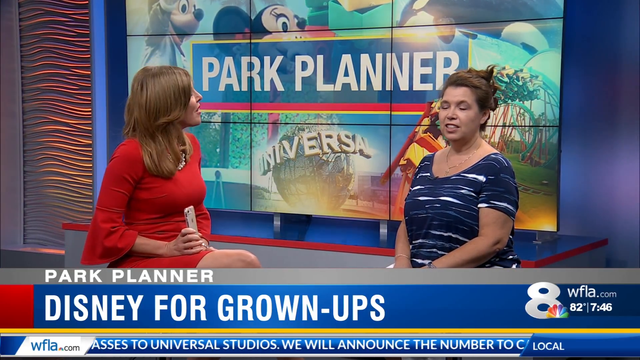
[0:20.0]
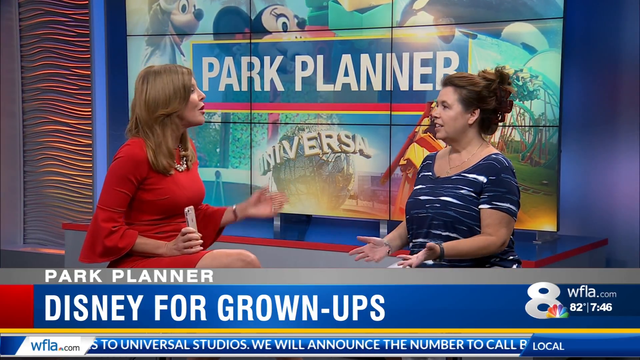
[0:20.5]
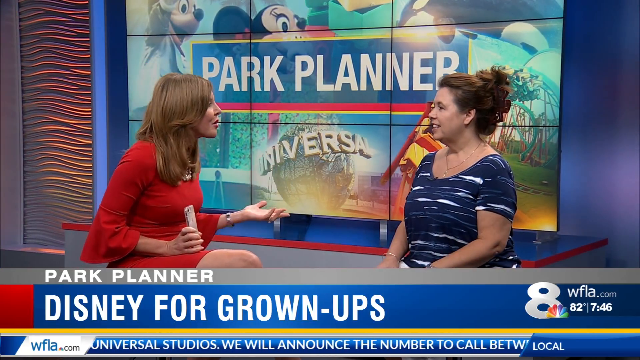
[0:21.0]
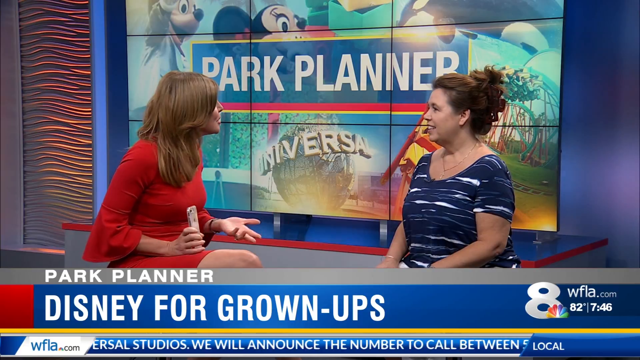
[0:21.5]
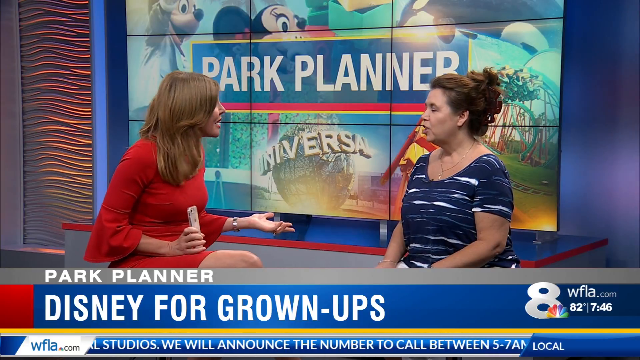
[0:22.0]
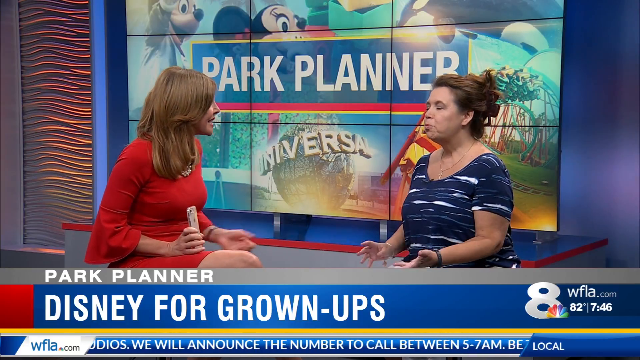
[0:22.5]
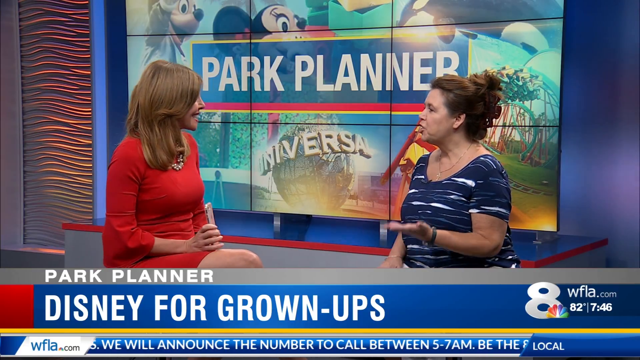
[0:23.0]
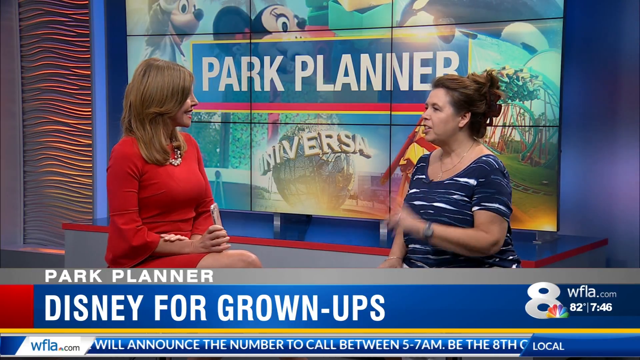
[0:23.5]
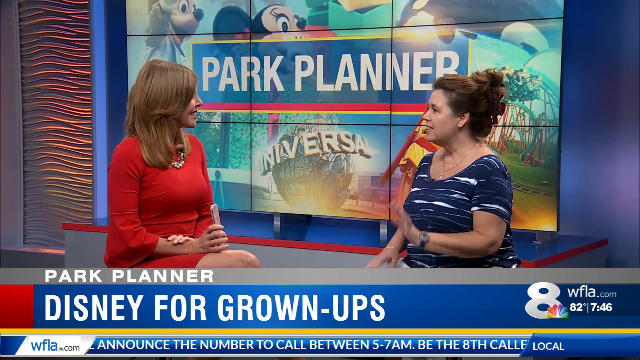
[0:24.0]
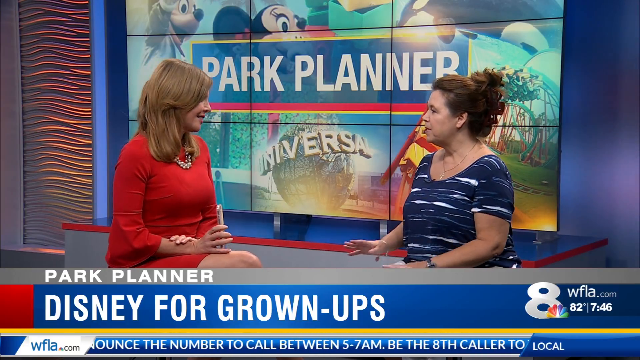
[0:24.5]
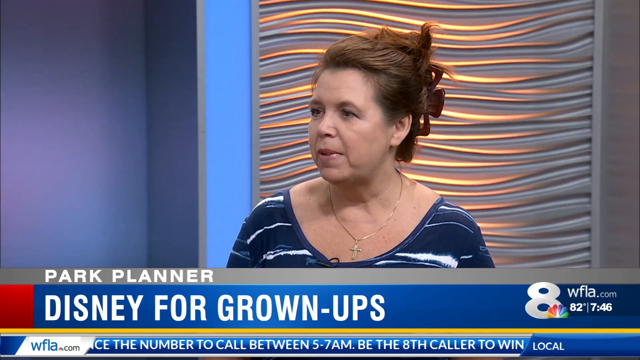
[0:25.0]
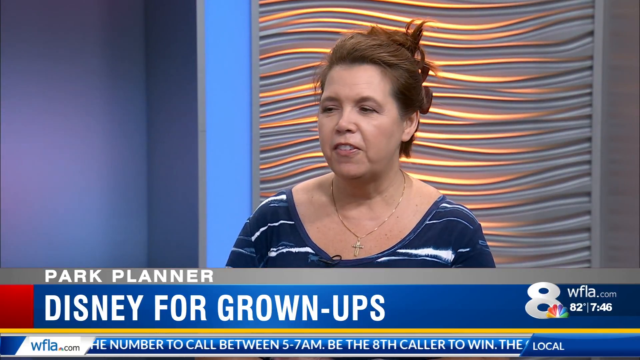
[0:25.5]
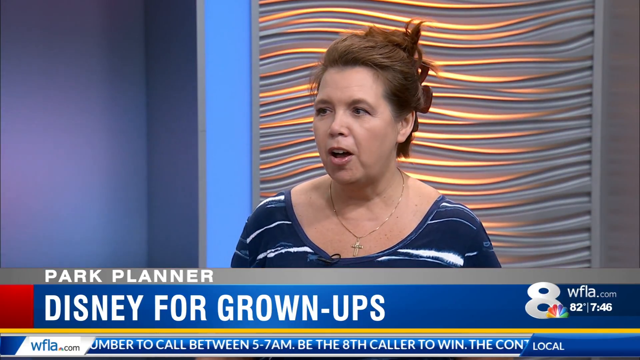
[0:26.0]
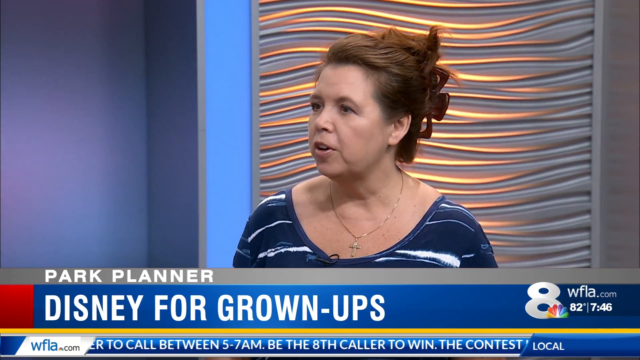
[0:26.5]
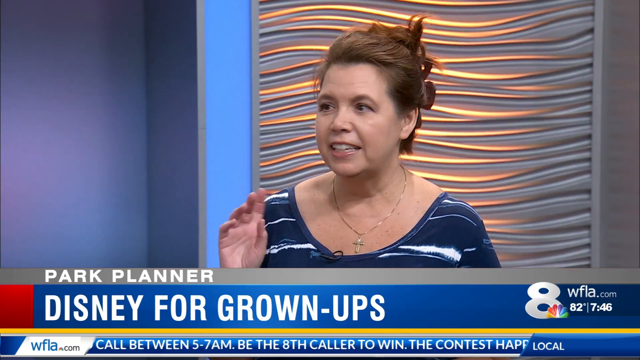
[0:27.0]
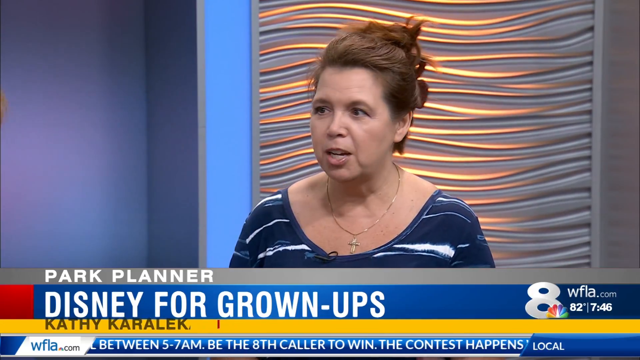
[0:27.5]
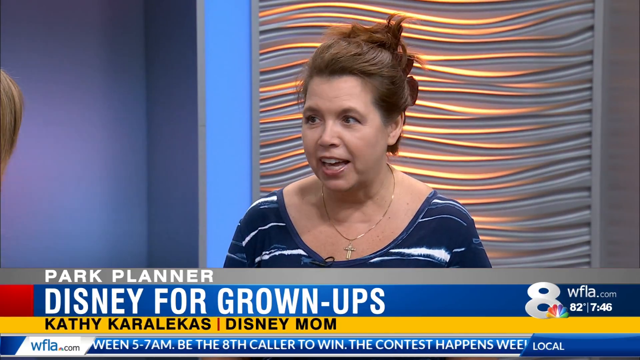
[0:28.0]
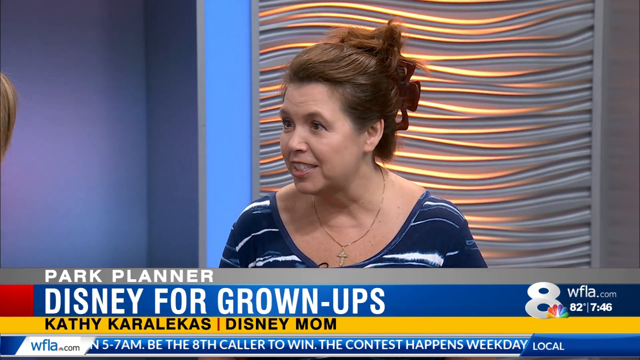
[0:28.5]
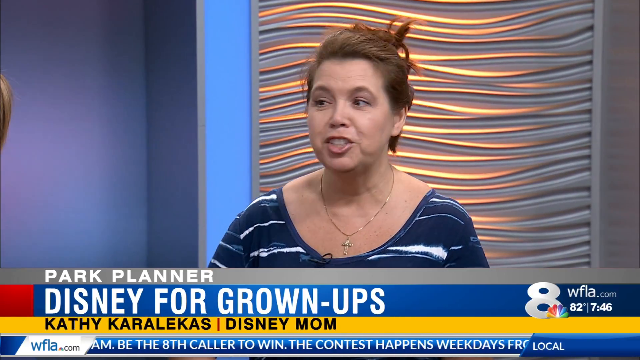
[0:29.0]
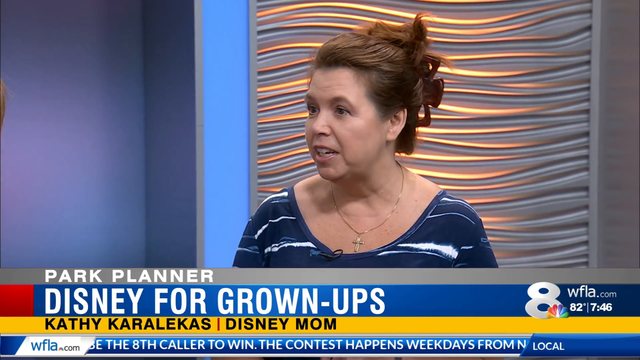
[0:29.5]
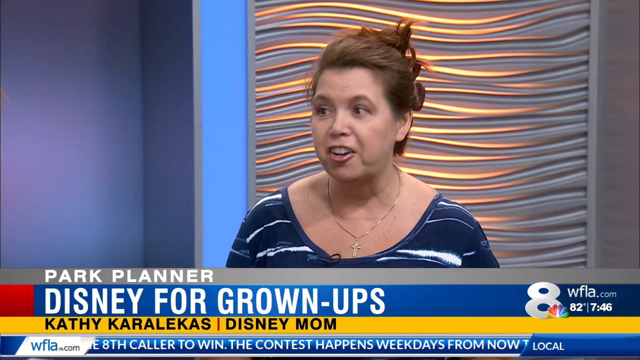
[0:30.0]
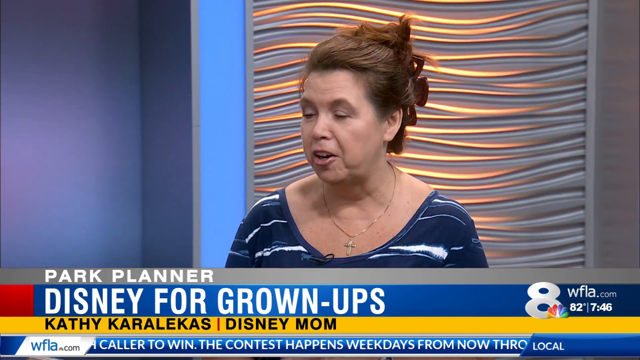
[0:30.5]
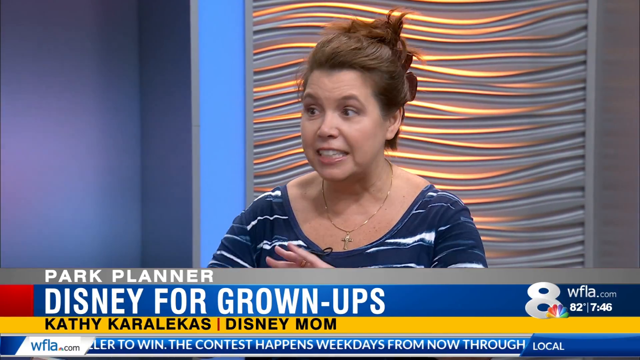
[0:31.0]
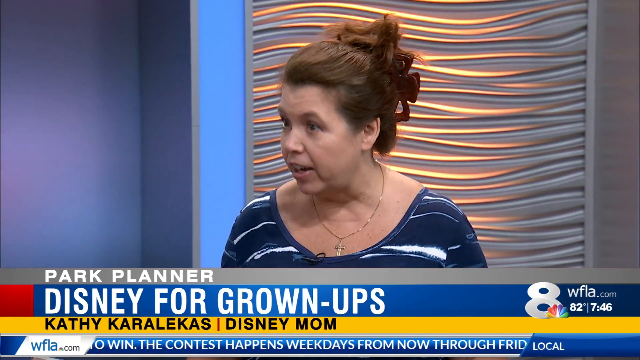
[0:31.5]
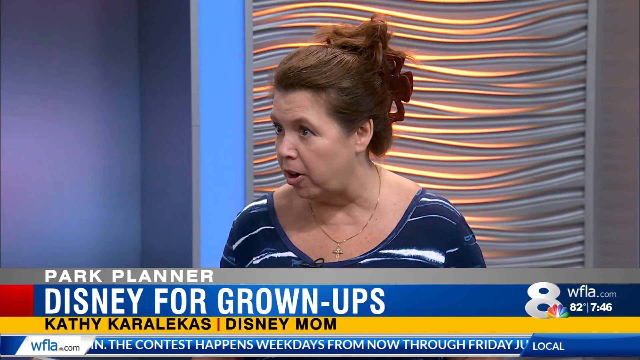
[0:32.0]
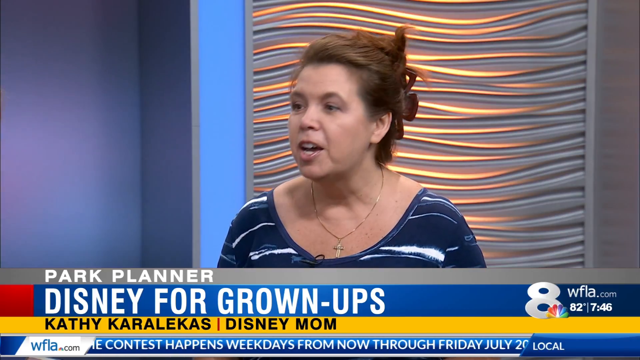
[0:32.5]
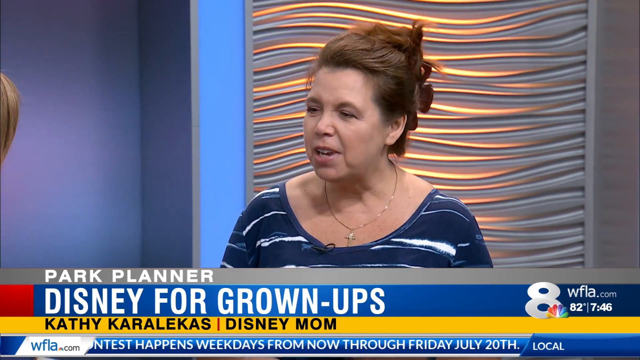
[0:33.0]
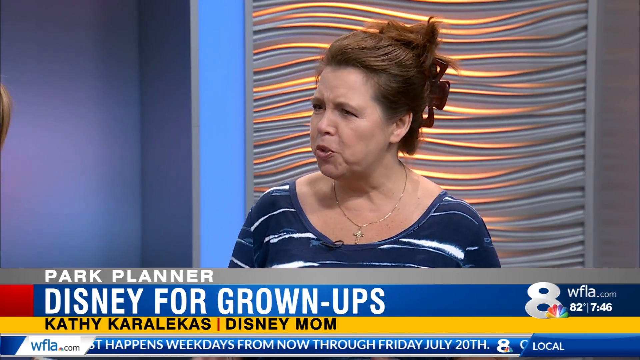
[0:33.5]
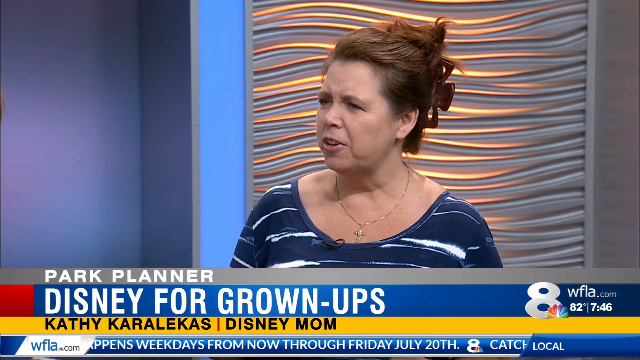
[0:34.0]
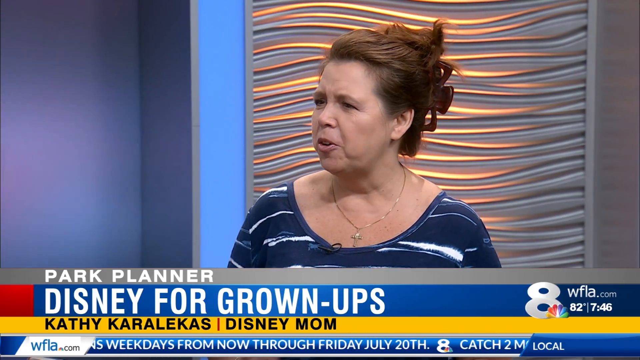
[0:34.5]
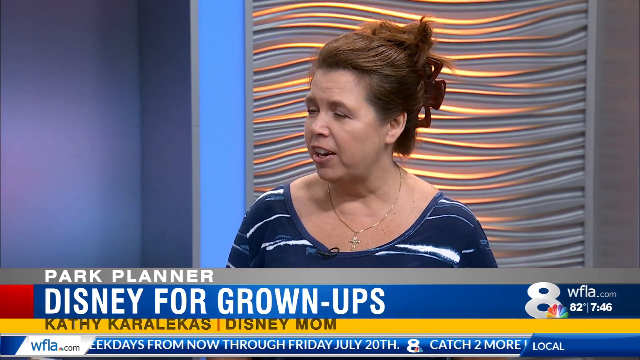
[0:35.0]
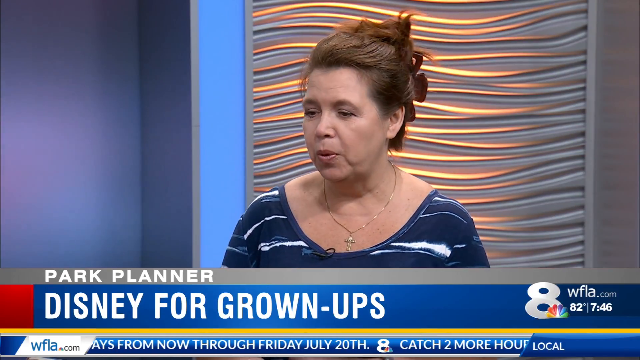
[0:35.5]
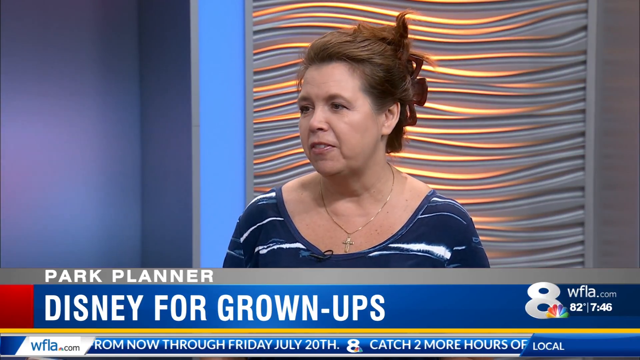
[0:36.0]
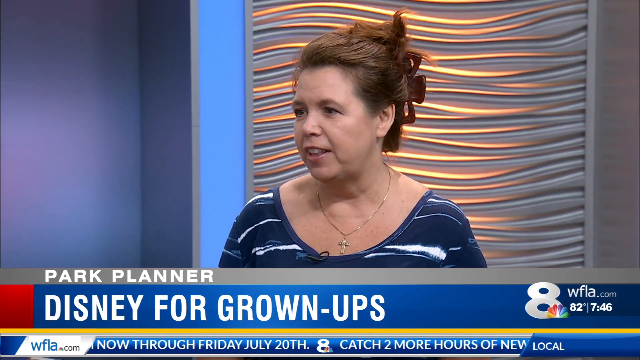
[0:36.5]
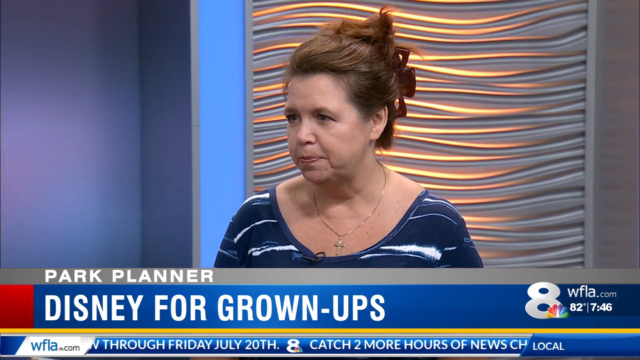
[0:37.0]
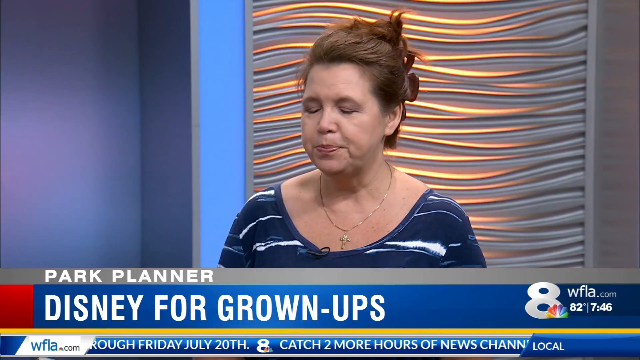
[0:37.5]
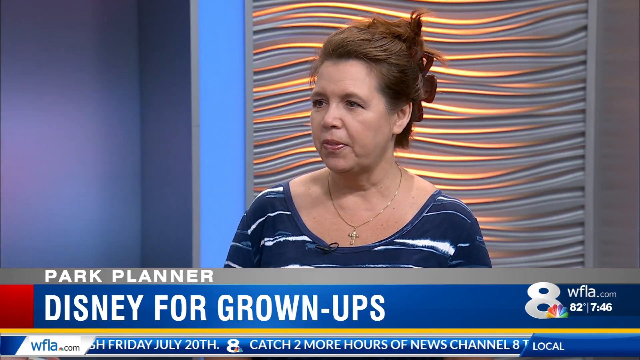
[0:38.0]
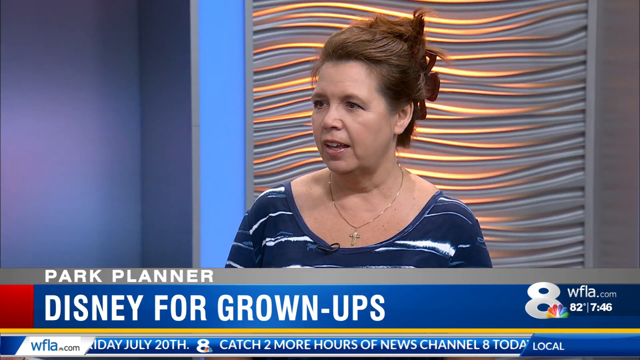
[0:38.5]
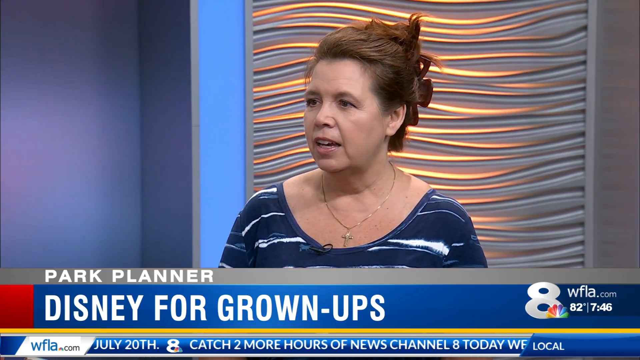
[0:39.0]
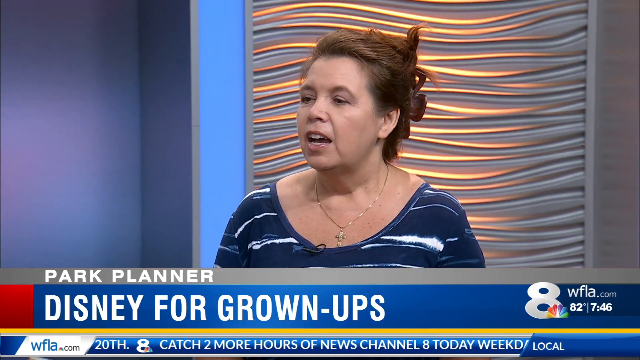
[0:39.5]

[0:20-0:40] The anchor in the red dress with bell sleeves holds something resembling a phone in her hands as she speaks to the woman in the white and blue T-shirt, whose brown hair is clipped up in a claw clip and who gestures with her hands as she talks. The women have a conversation. The shot changes and a yellow bar at the bottom of the screen names the woman in the blue and white T-shirt as Kathy Karalekas, referring to her as a Disney mom. Kathy wears a gold cross necklace and is the only one in the frame, speaking directly to the news anchor, who is out of frame and seems to have asked her a question that she is answering. The background behind Kathy is blue, and she smiles slightly as she speaks. At the very bottom of the screen a blue ticker scrolls news and announcements, and on top of the blue banner is a gray banner that says "park planner" in white text.